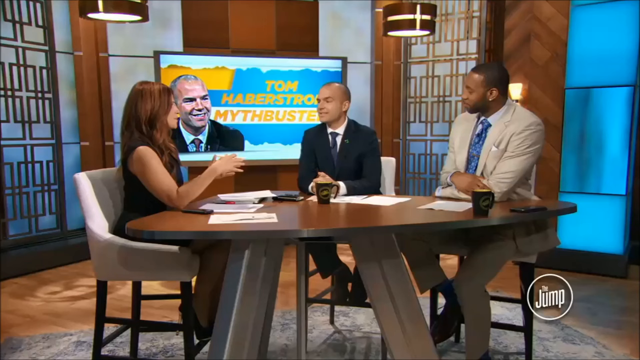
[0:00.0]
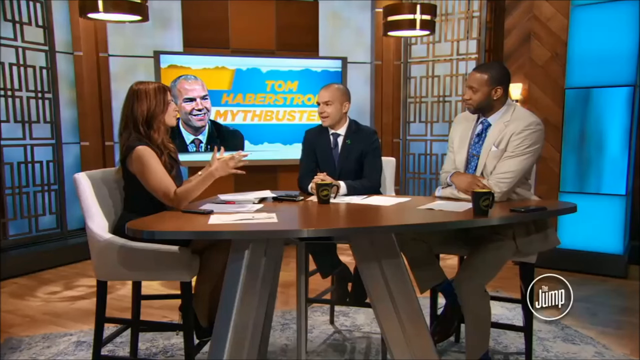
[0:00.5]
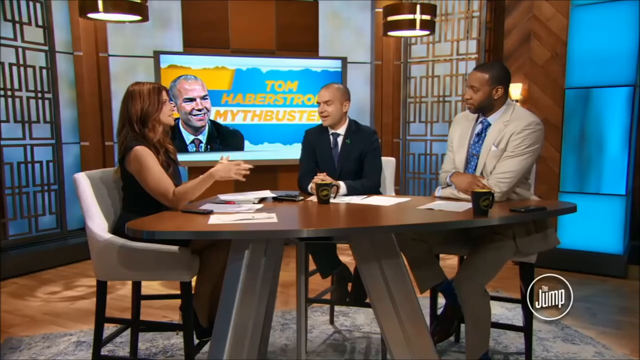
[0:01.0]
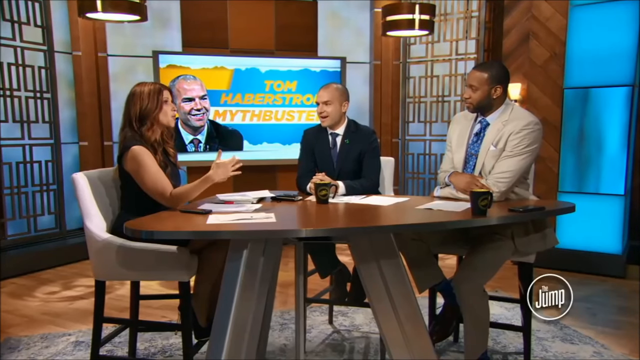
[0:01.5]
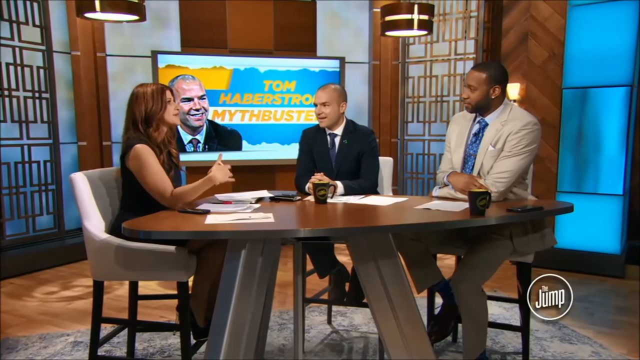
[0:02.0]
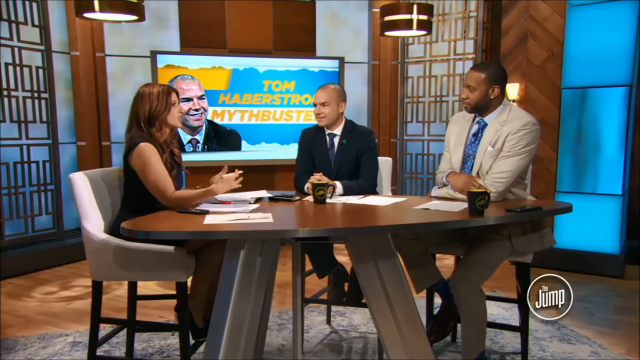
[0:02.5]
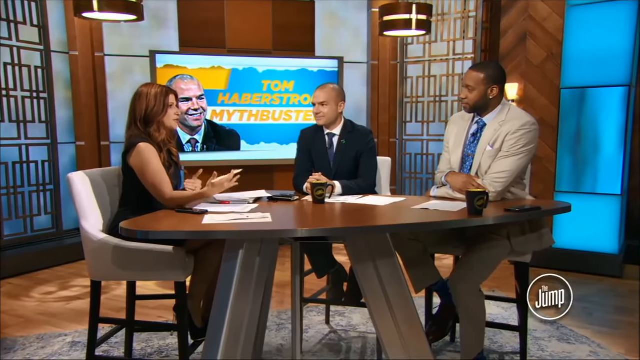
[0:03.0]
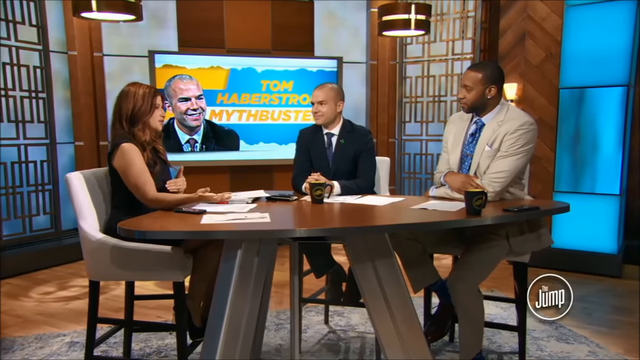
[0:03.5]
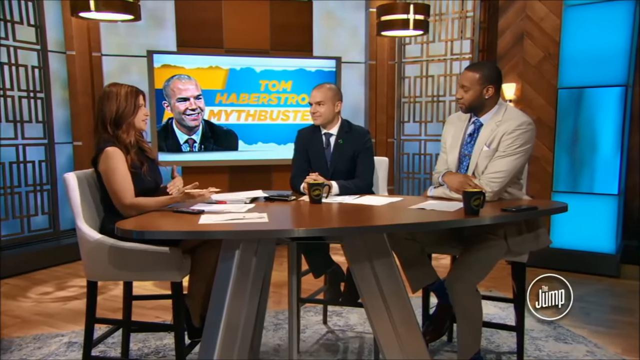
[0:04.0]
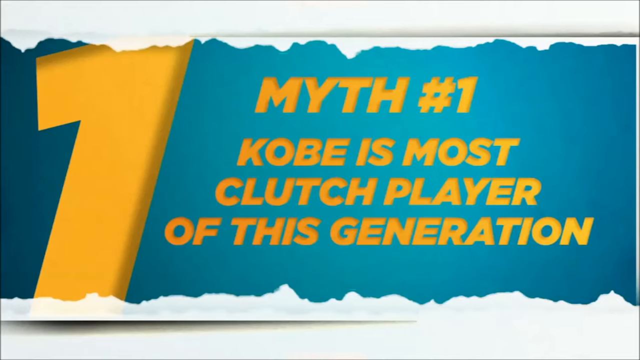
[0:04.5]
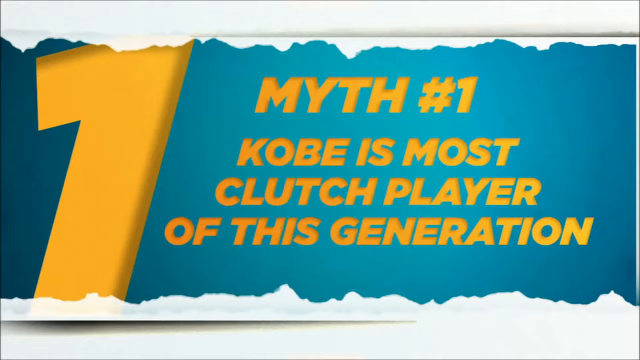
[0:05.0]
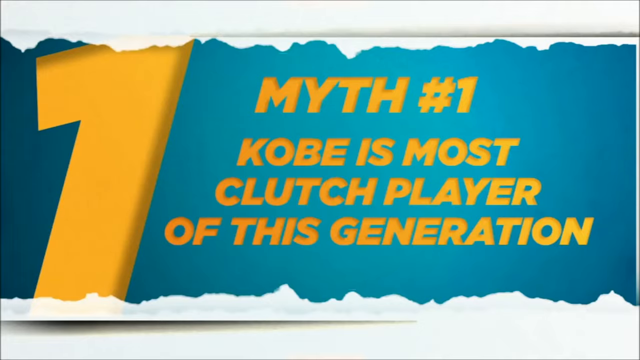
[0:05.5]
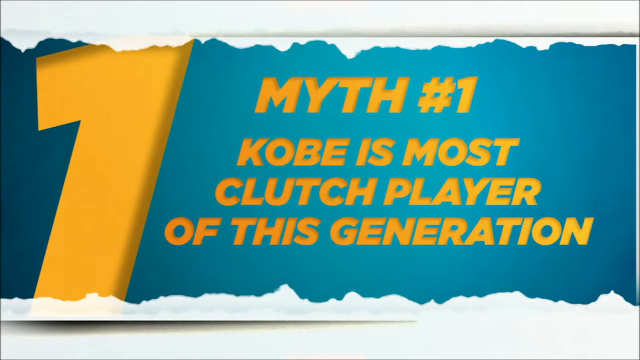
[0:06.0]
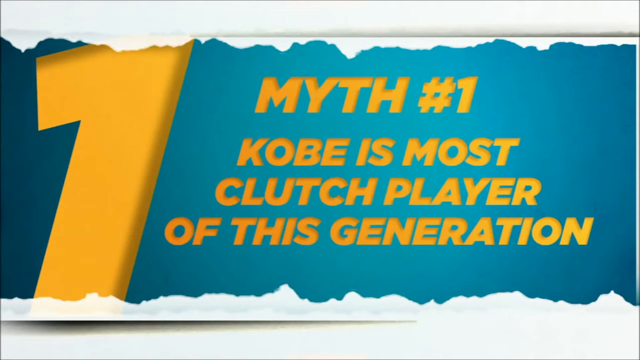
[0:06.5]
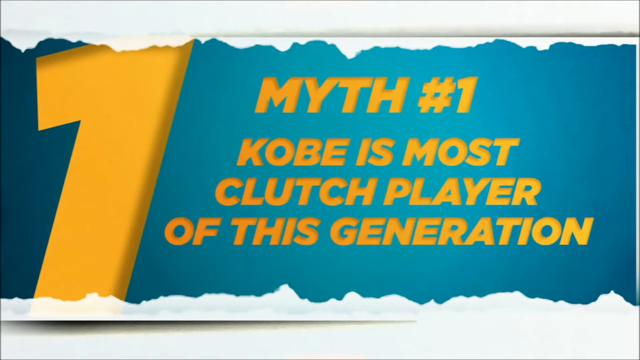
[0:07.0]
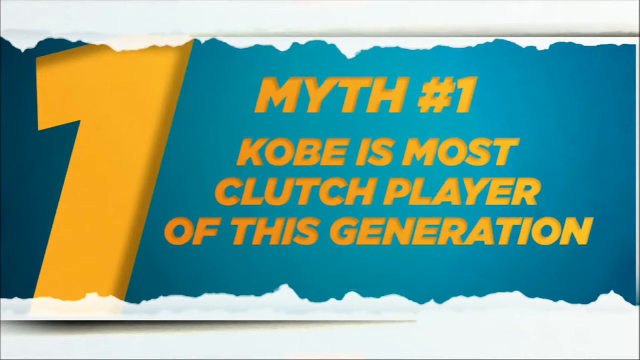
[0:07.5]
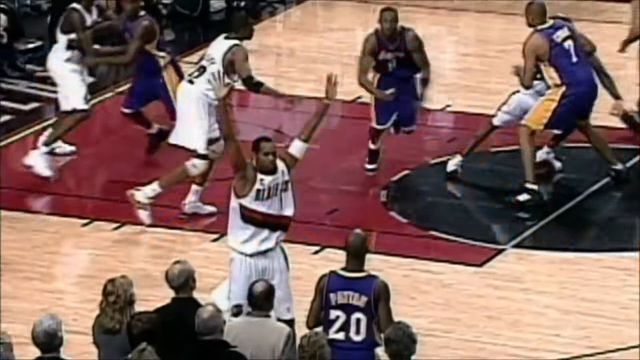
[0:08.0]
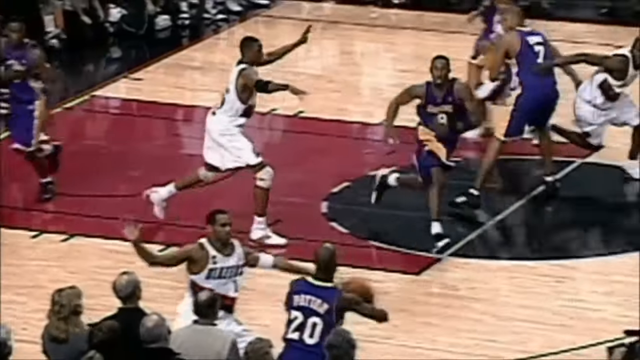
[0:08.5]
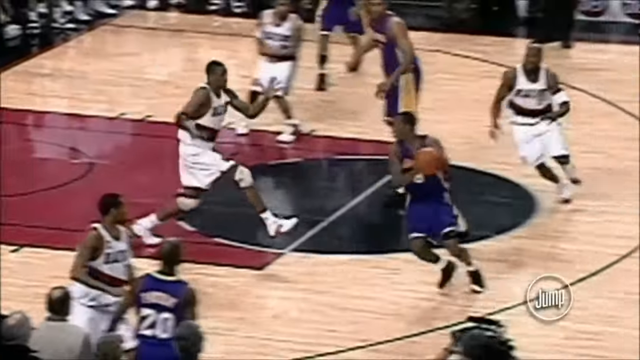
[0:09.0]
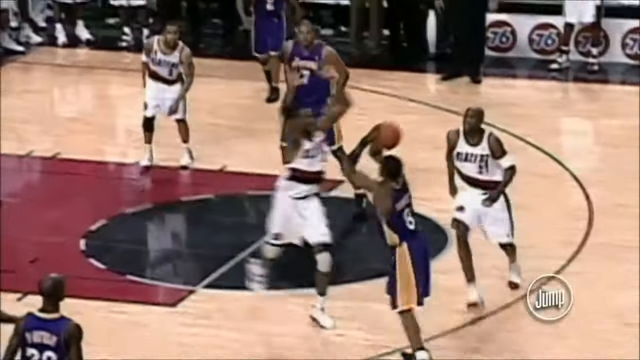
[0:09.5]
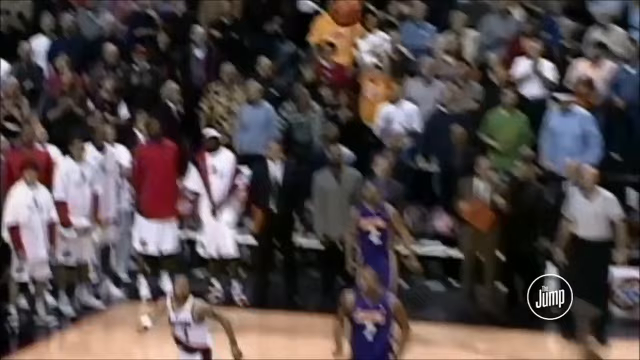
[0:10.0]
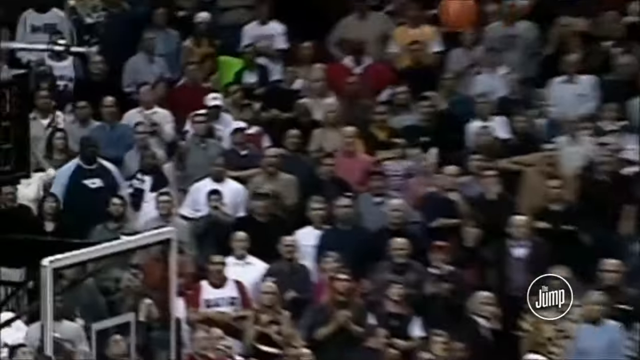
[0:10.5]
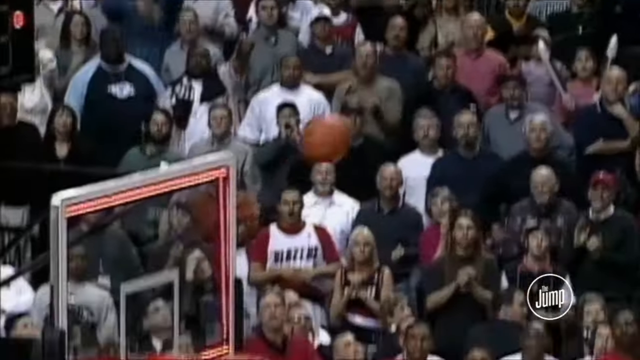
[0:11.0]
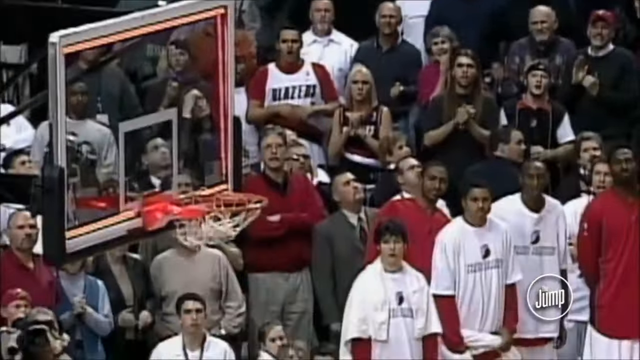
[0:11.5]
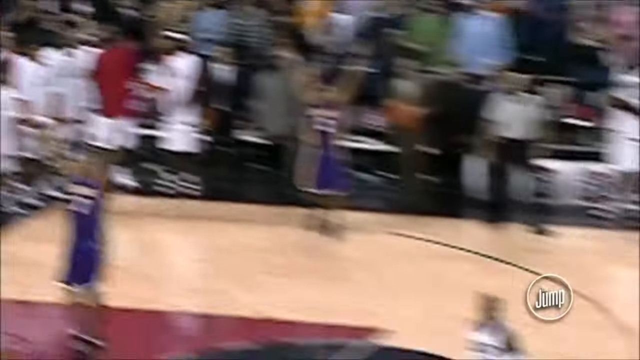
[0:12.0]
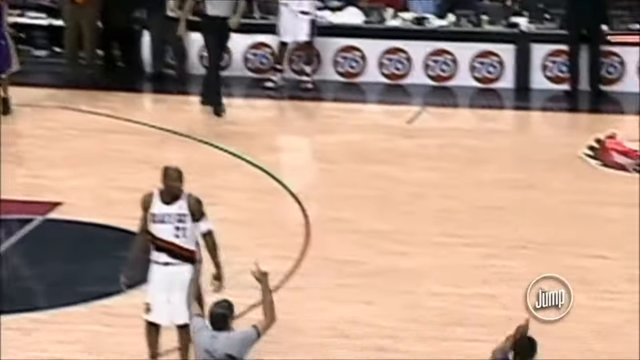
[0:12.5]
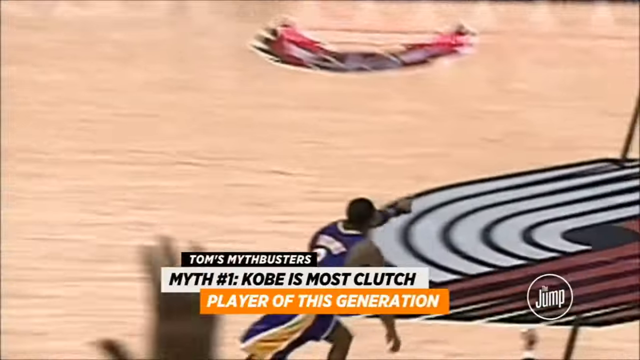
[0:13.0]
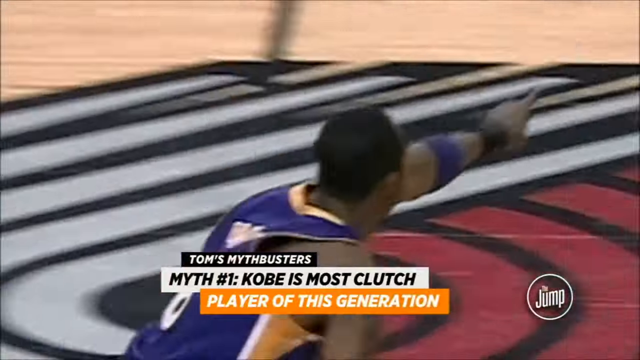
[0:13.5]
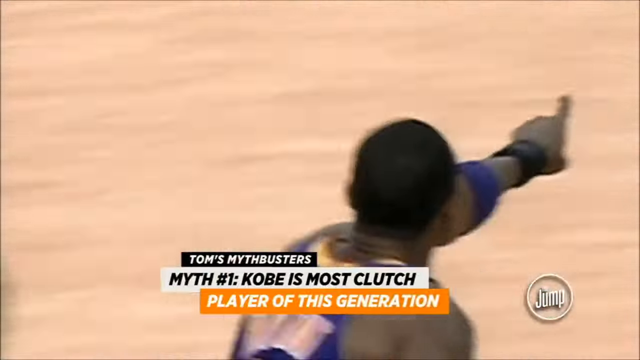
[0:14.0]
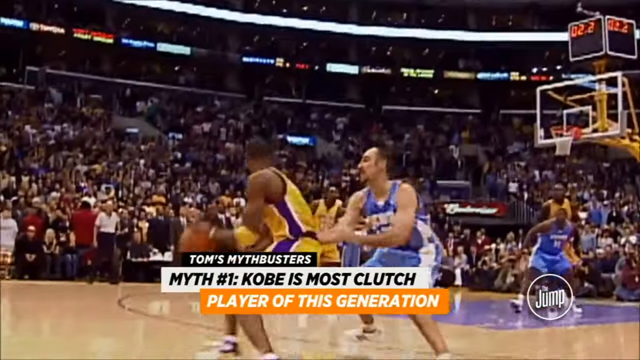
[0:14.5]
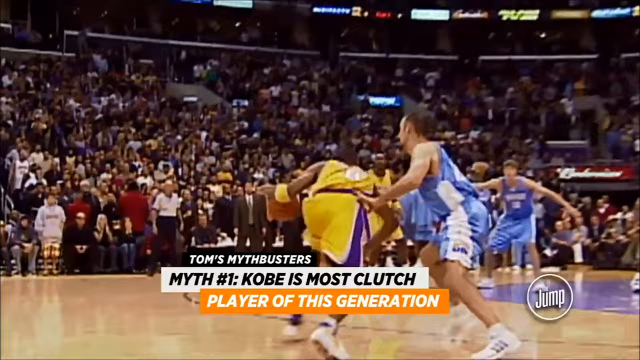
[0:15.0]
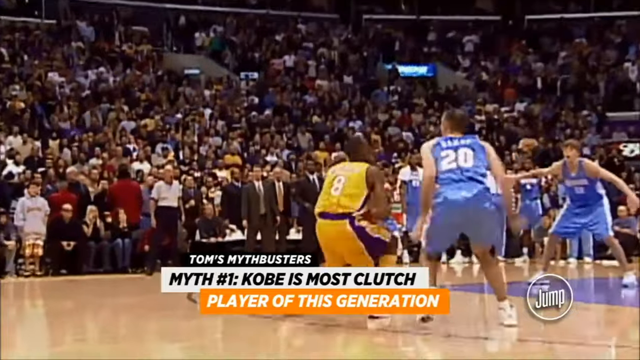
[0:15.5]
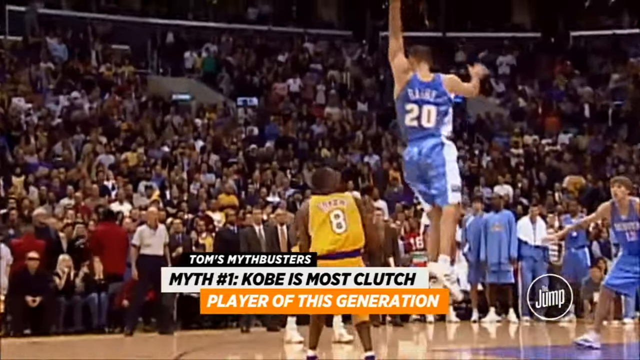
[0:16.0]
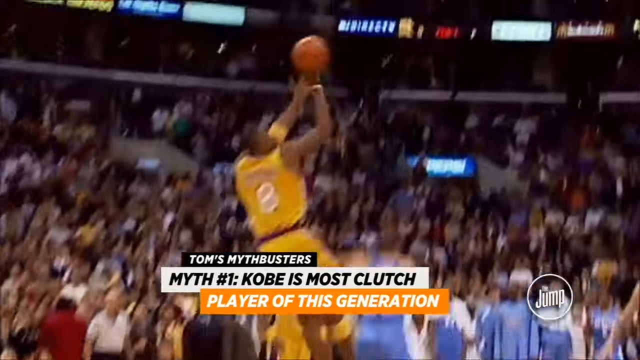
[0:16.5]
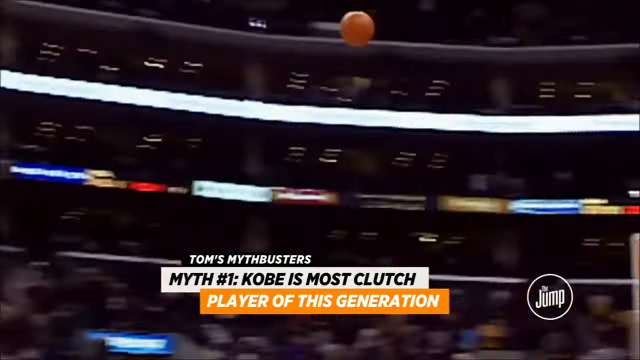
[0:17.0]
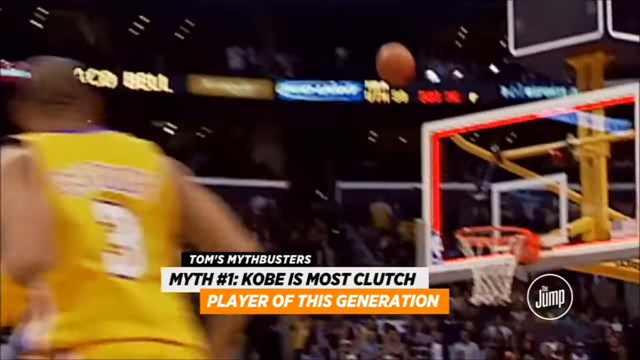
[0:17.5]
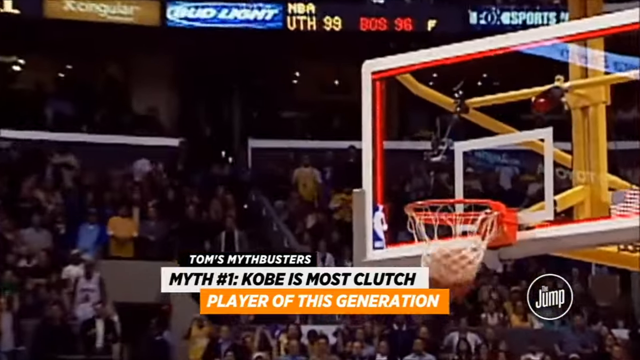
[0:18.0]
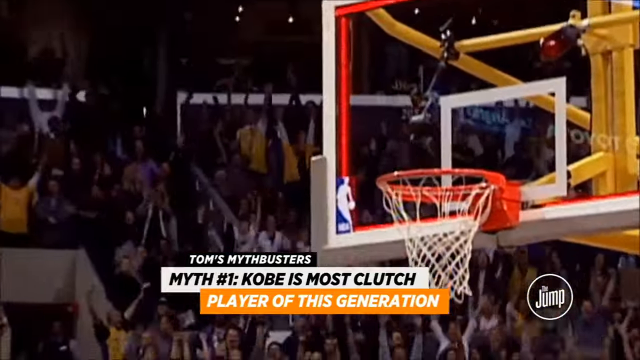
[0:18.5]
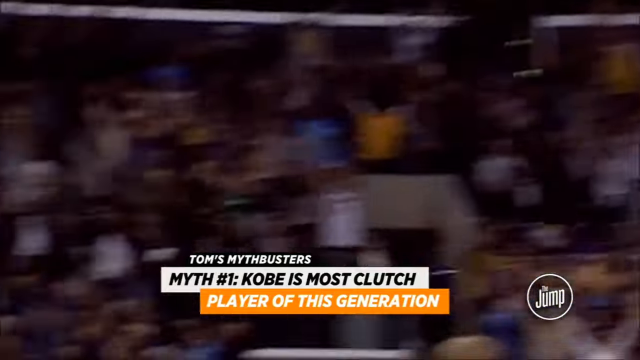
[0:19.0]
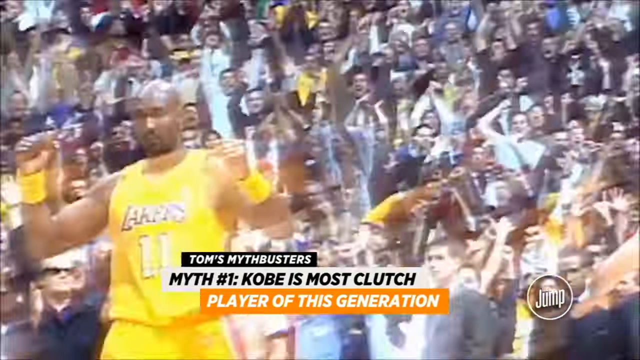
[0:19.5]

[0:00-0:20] What looks like a sports analysis segment takes place at a round table. A woman on the left sits in a plush white chair, visible underneath her, wearing a black dress with cut-off sleeves. She is the one talking while the two men on the other side and to her left sit looking at her. The man in the middle is apparently Tom Haverstrom, since a TV behind him shows someone who looks just like him; he wears a suit jacket and a darker-colored tie, with his hands clasped and his elbows on the table. A Black man wears a matching sand-colored suit and pants with a medium blue tie. The woman gestures with her hands and holds a pen between her thumb and index finger. An interlaced circle logo stays in the bottom right corner of the screen. She leans back a little, and the video cuts to a graphic that looks like a torn blue piece of paper, with tear lines above and below it. In yellow all-caps text it reads "myth number one" and "Kobe's most clutch player of this generation", with a number one cut off at the top and bottom by the tear. Highlights follow of the Trail Blazers playing the Lakers: someone passes him the ball, he goes up to shoot and swishes it. A referee puts his hands up in the air, and he points toward someone in the distance who is out of view. Next he is guarded by number 20; he turns, pivots to get separation, head fakes, then goes back up and makes another shot. At the end, someone appears to have fallen and he seems to be picking that person up.